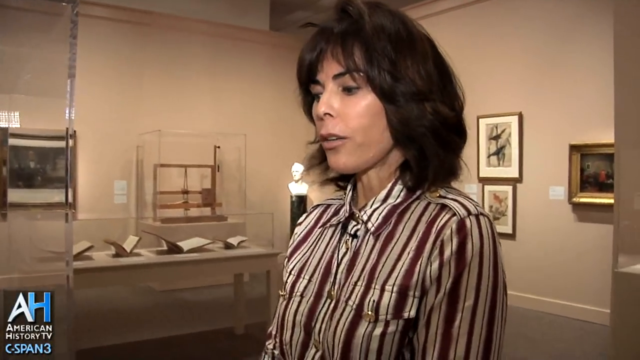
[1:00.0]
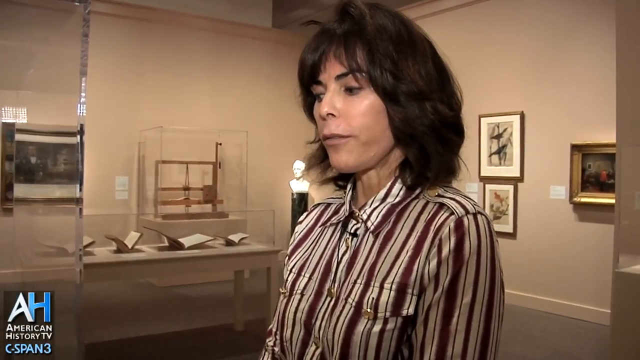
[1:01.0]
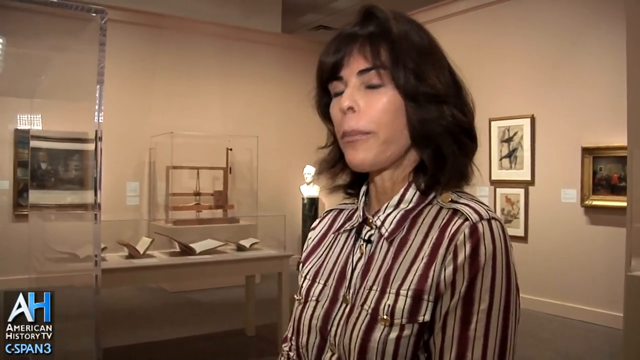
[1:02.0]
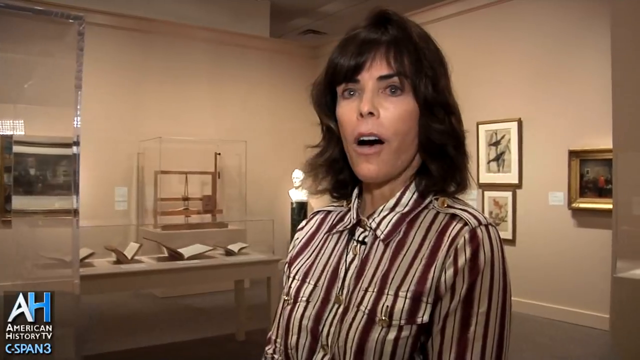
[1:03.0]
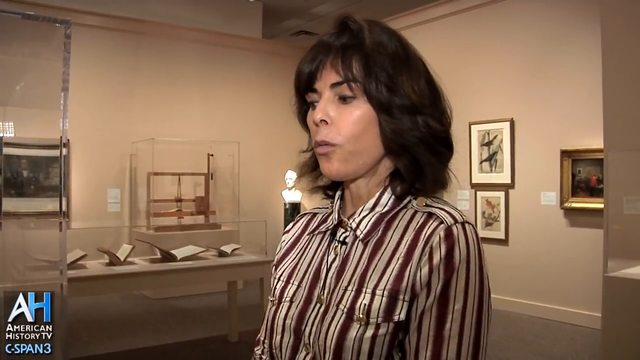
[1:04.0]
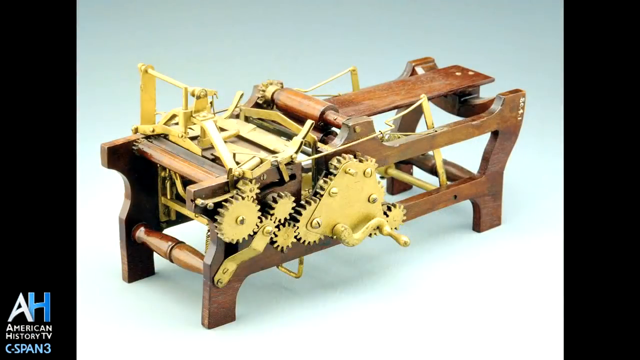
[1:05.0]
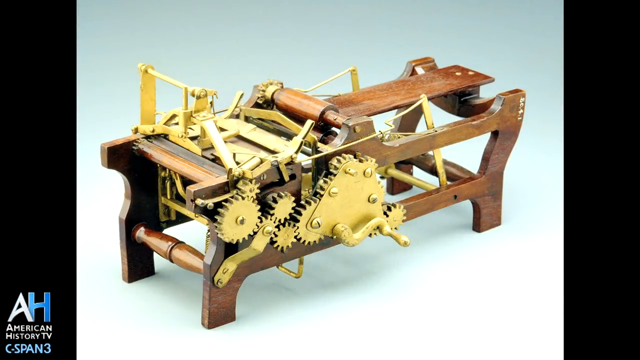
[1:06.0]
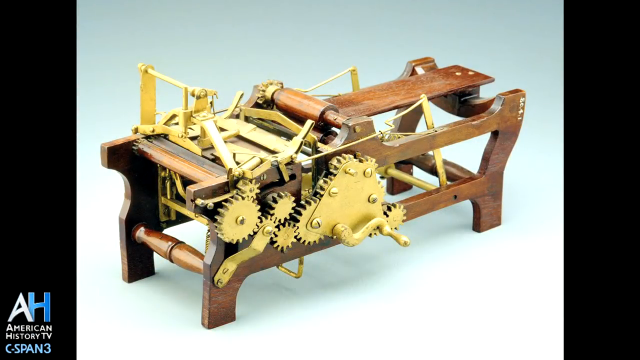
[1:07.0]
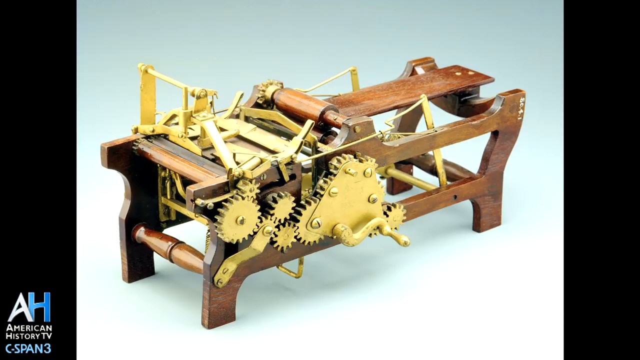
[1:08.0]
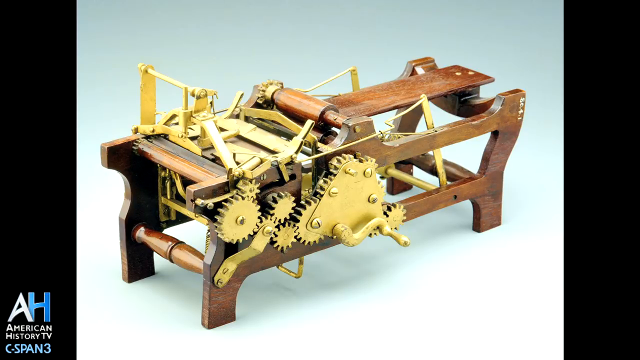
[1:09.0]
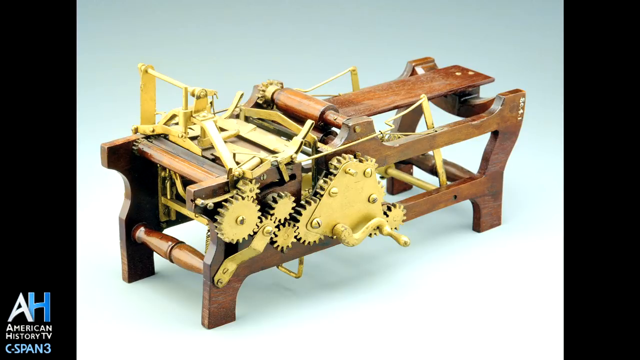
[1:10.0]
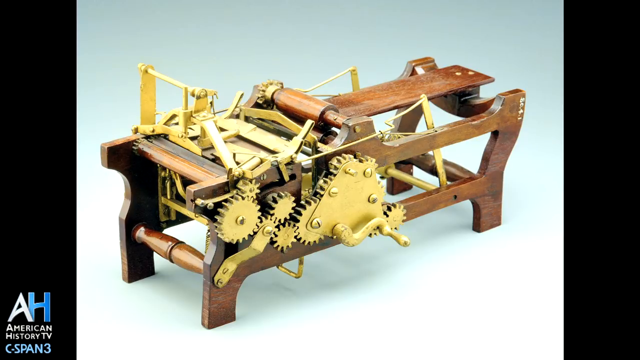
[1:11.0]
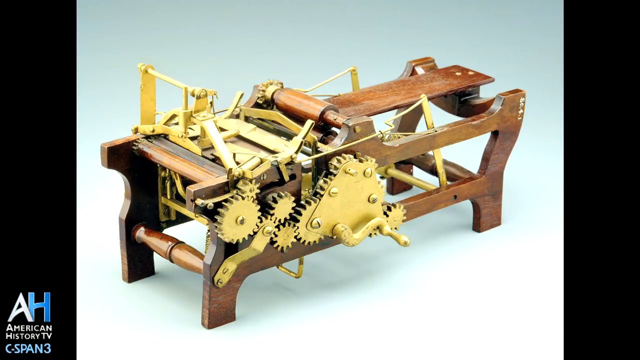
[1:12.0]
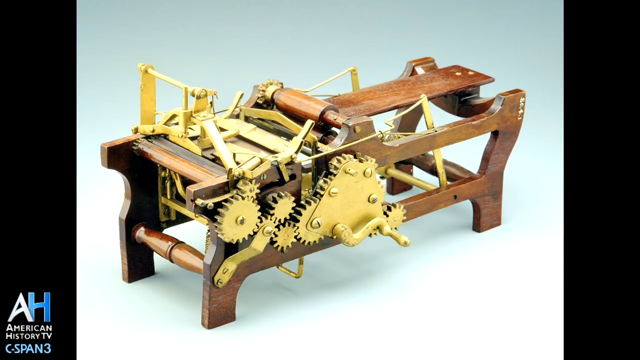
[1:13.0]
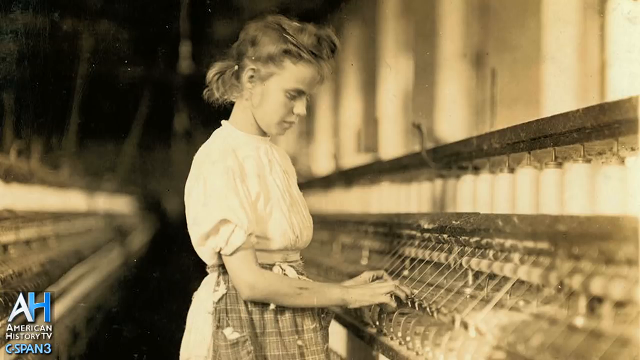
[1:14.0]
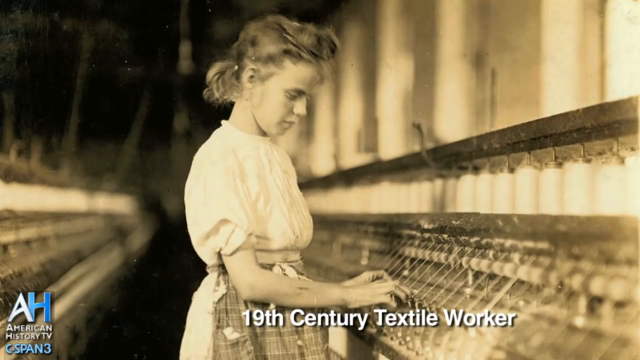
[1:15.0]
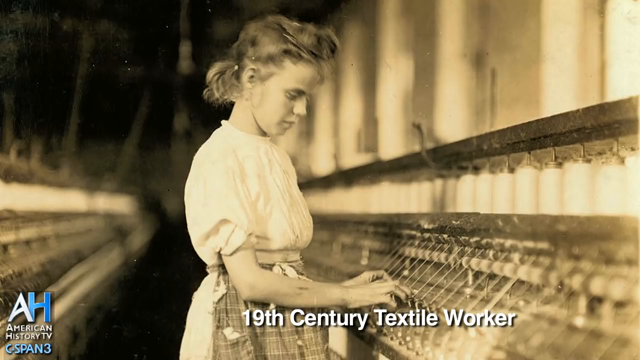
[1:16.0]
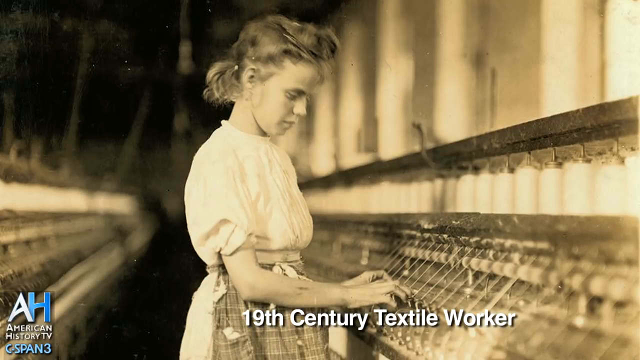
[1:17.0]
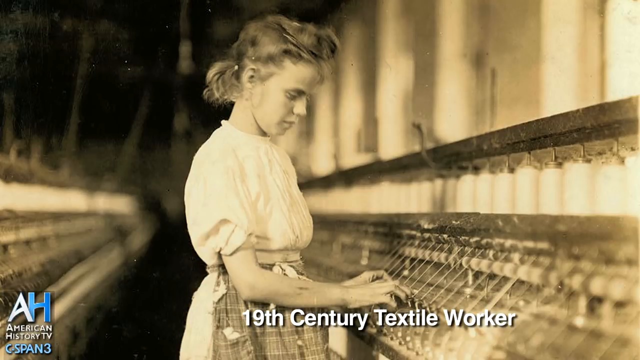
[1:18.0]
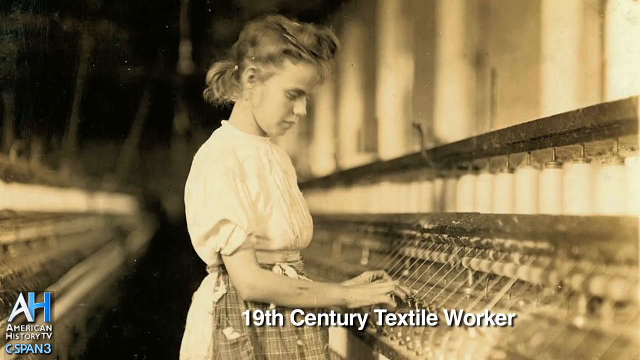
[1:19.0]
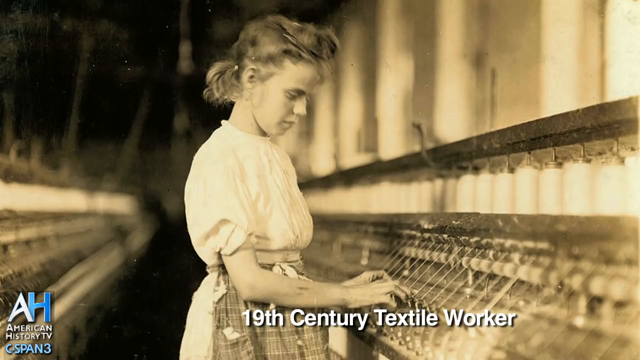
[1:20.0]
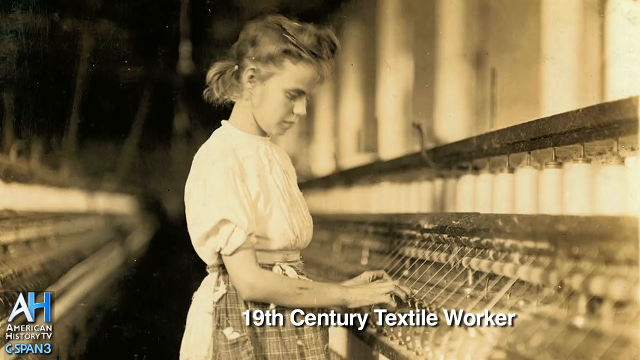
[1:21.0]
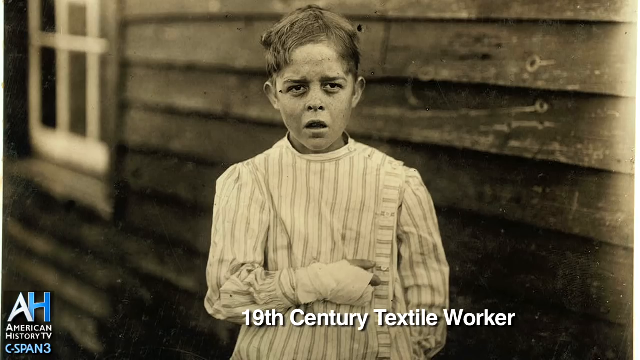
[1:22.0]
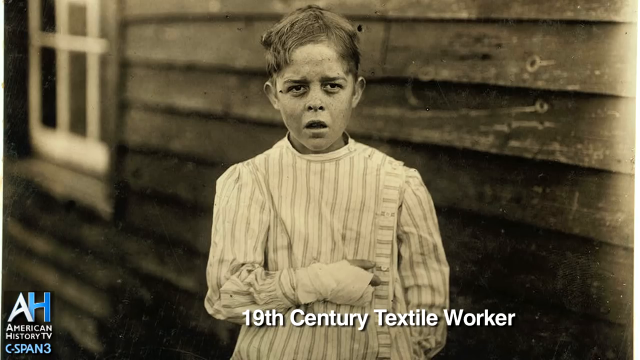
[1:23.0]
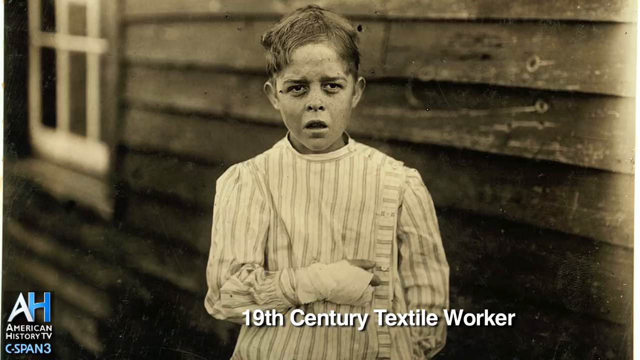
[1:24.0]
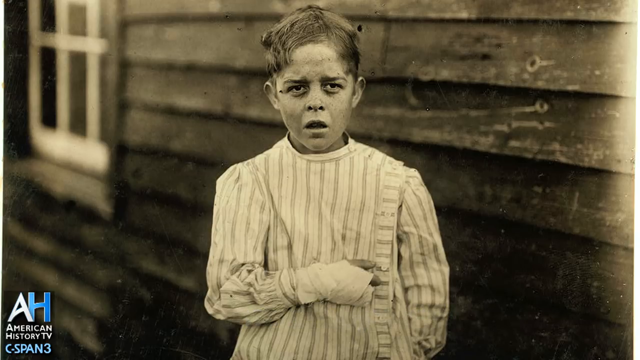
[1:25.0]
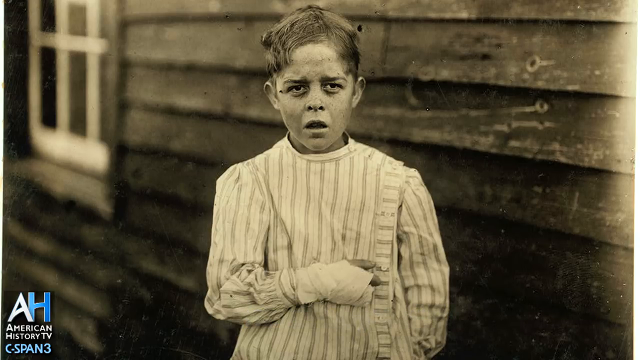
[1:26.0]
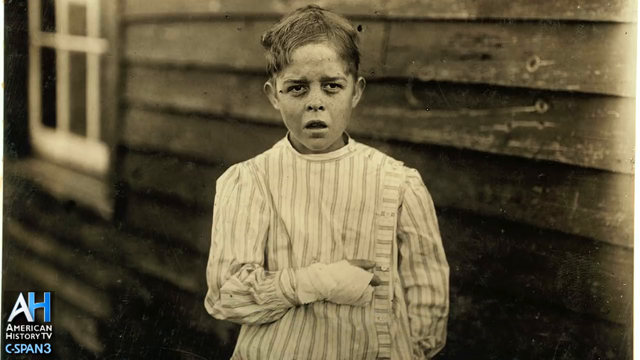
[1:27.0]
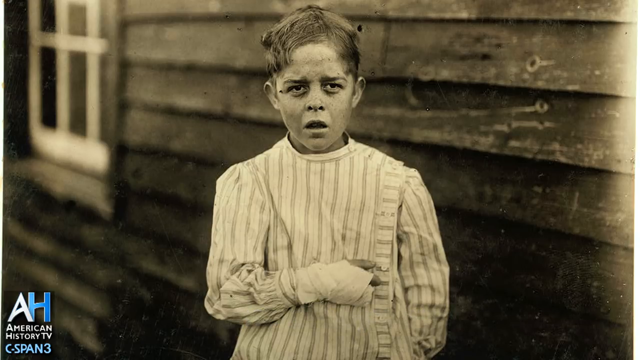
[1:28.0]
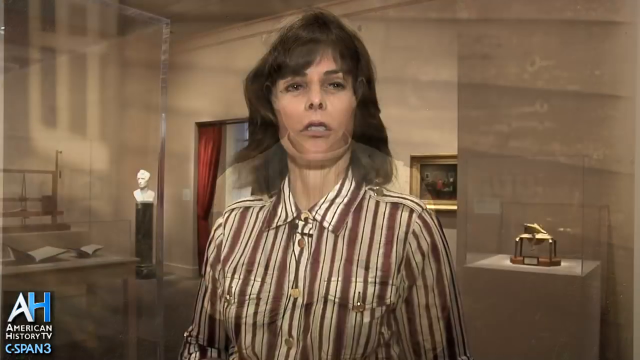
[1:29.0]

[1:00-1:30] Inside the Smithsonian Museum, a woman gives a tour. She has a sort of 80s layered haircut with brown hair and wears a silk blouse buttoned all the way up, with vertical off-white and maroon stripes and epaulets on the shoulders. She describes something inside a glass case: an invention with a wooden frame and brass fittings with lots of gears, cogs and levers. The video cuts to a black-and-white picture of a child labeled "19th century textile worker"; she is operating a loom and touching something with her fingers, probably winding on the thread. Another child is shown who looks like they may have been hurt: their hair is all cut off, there are scabs on their face, and their hand is bandaged.